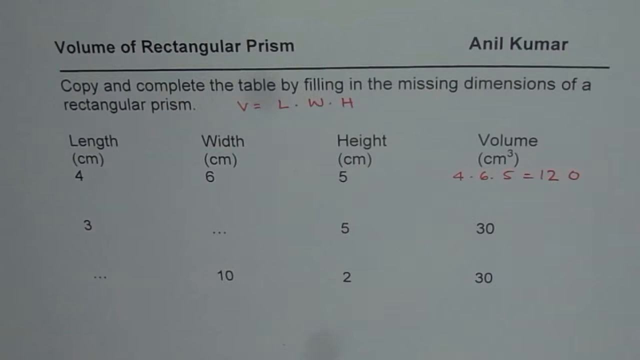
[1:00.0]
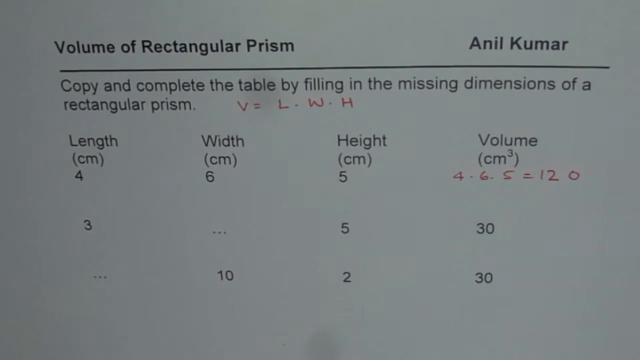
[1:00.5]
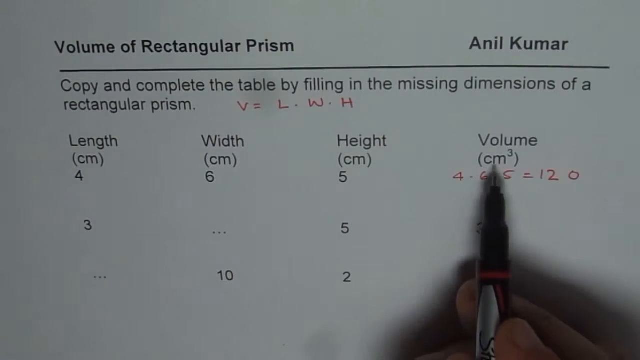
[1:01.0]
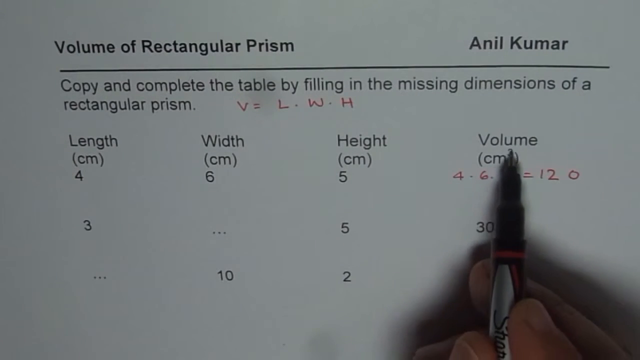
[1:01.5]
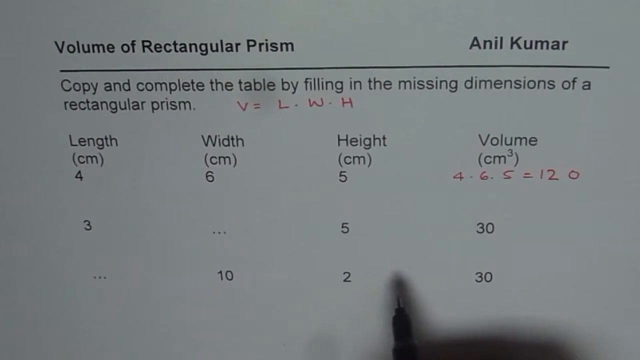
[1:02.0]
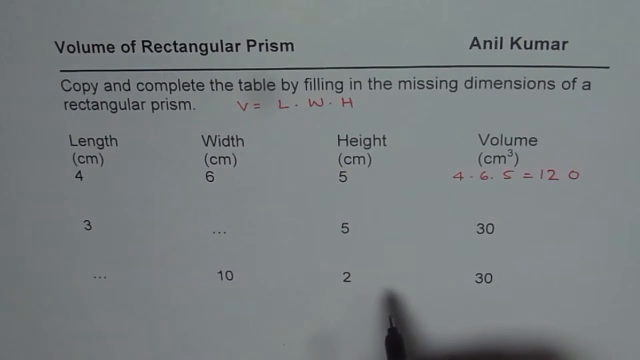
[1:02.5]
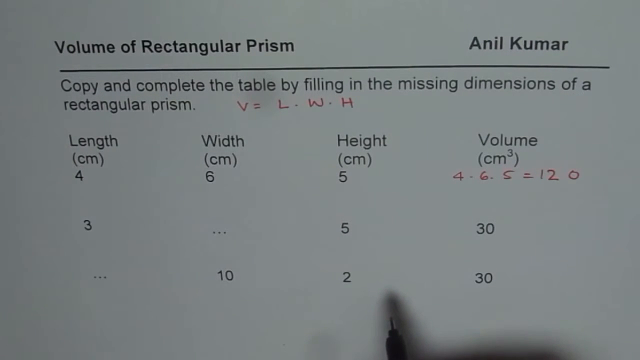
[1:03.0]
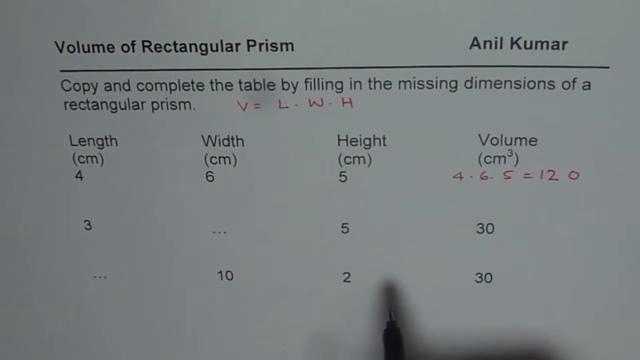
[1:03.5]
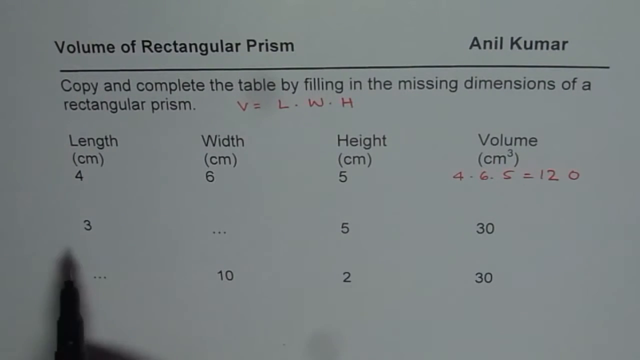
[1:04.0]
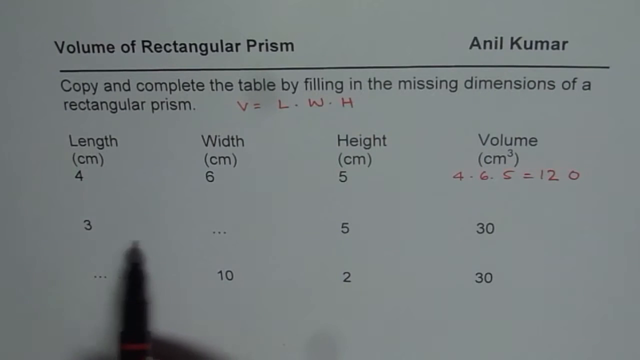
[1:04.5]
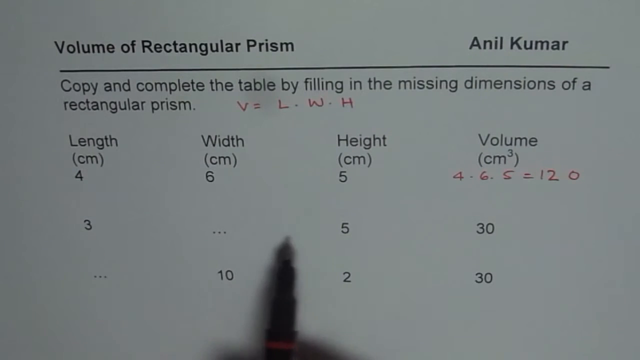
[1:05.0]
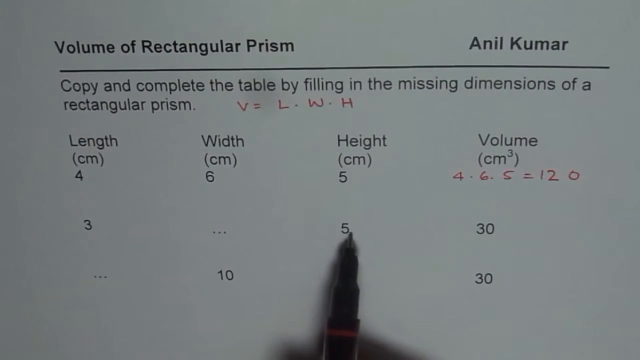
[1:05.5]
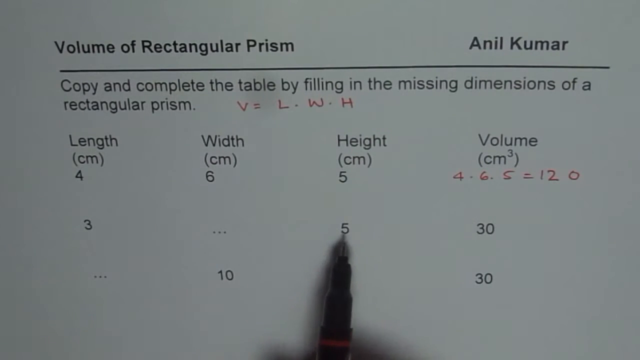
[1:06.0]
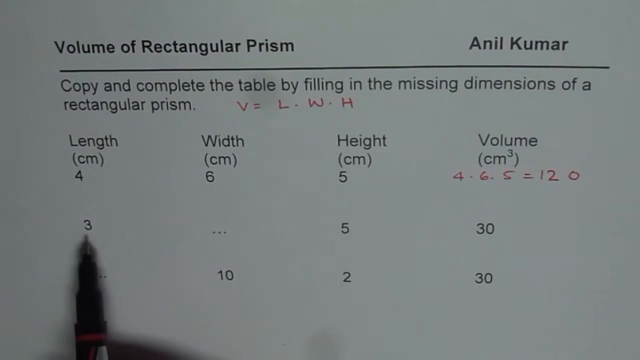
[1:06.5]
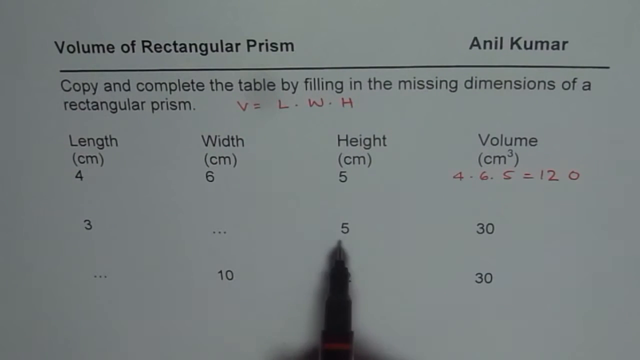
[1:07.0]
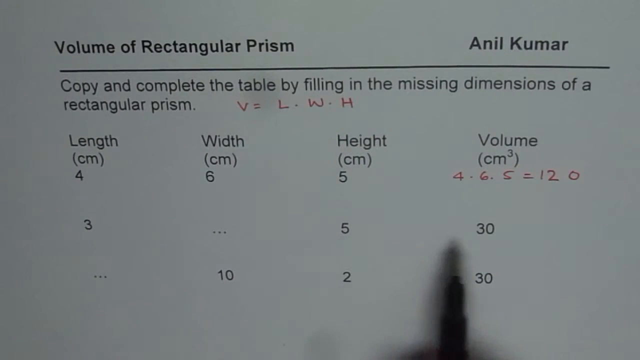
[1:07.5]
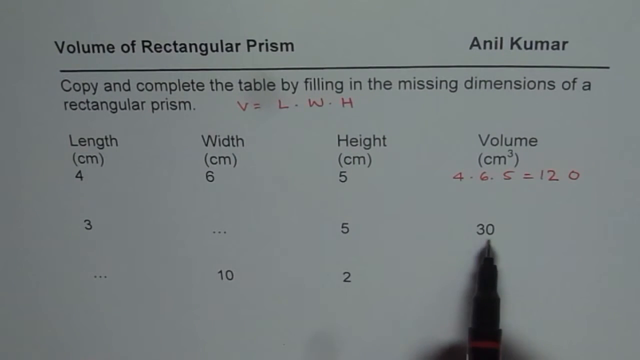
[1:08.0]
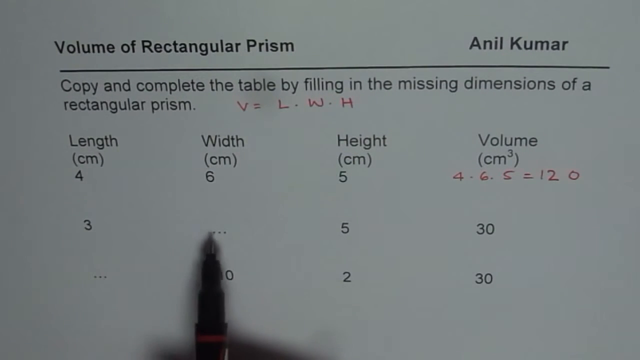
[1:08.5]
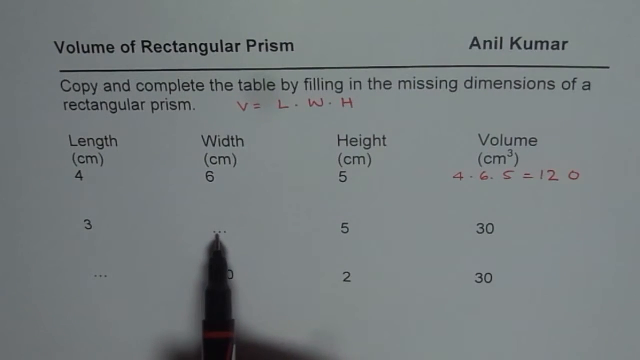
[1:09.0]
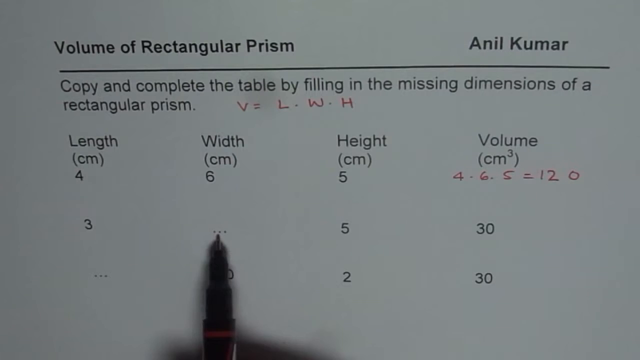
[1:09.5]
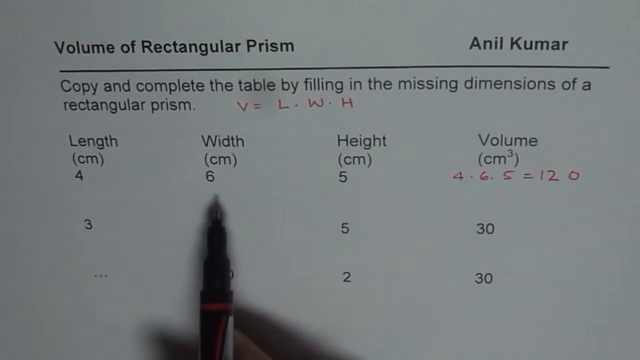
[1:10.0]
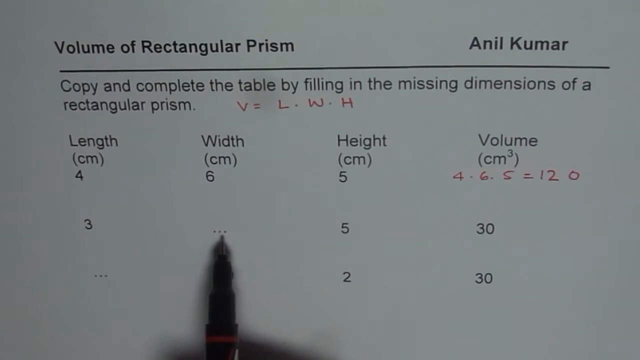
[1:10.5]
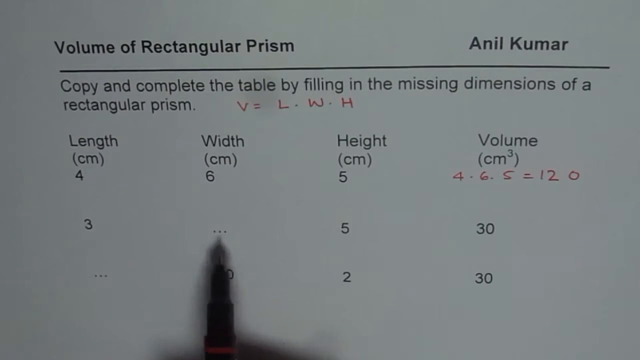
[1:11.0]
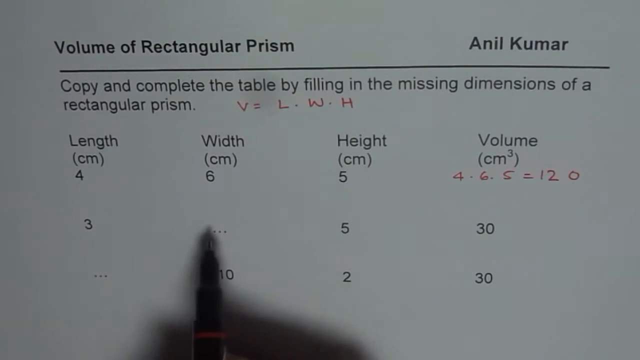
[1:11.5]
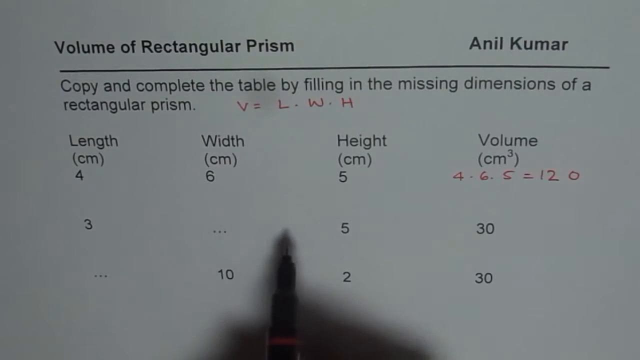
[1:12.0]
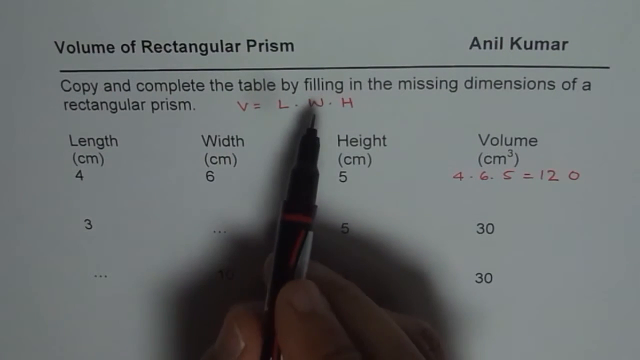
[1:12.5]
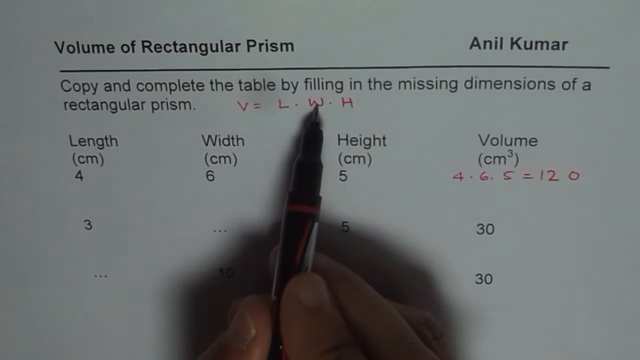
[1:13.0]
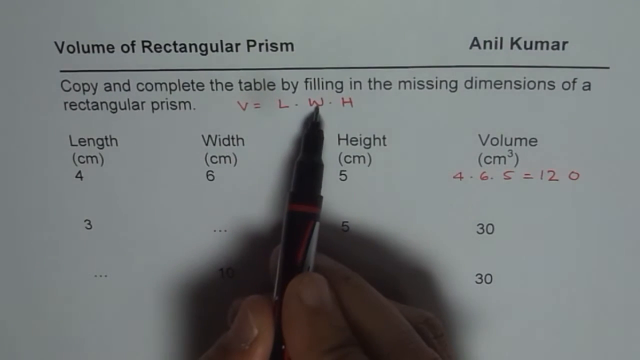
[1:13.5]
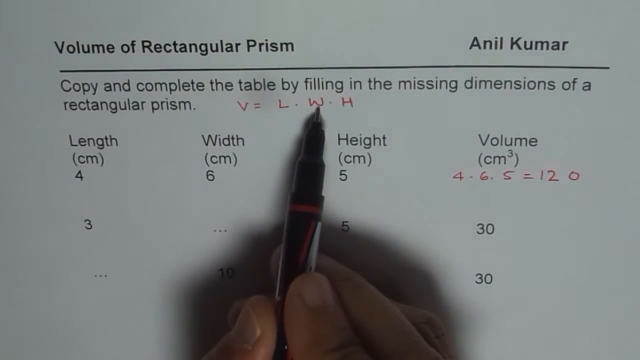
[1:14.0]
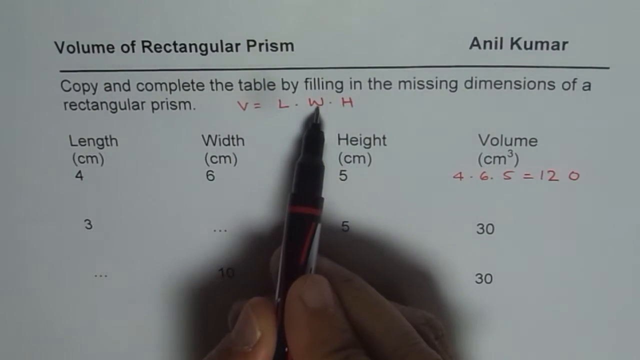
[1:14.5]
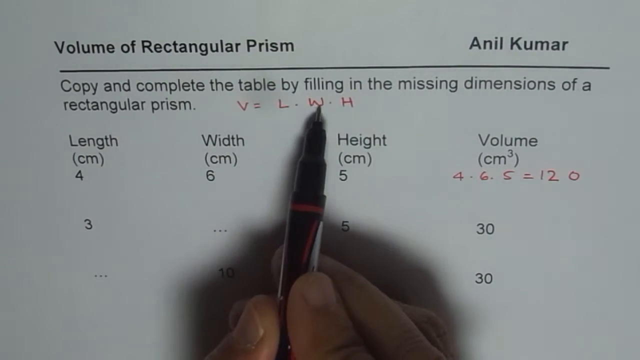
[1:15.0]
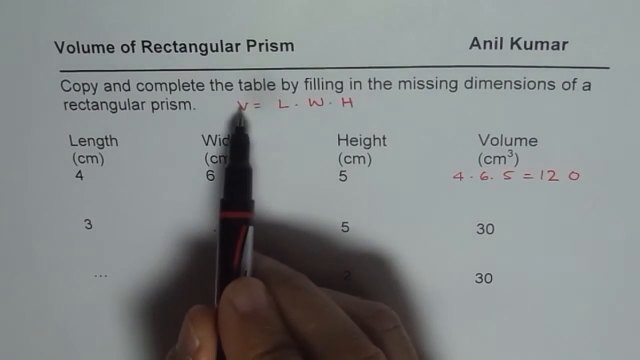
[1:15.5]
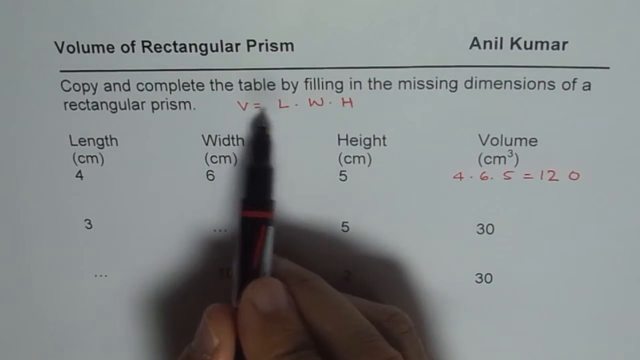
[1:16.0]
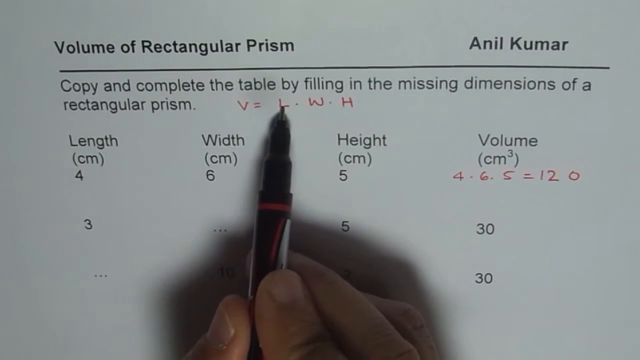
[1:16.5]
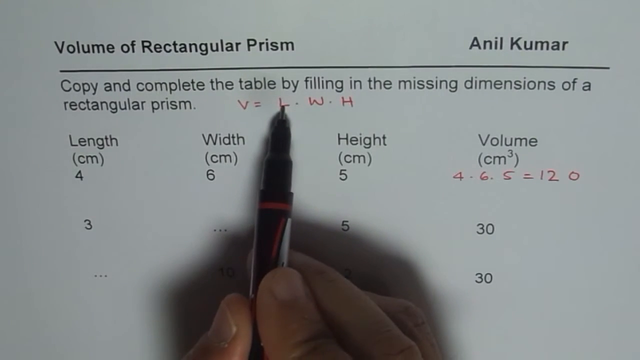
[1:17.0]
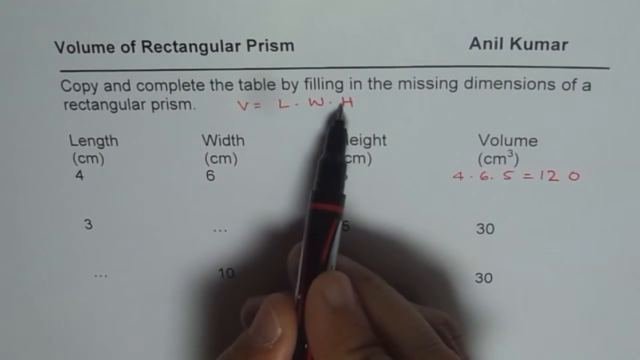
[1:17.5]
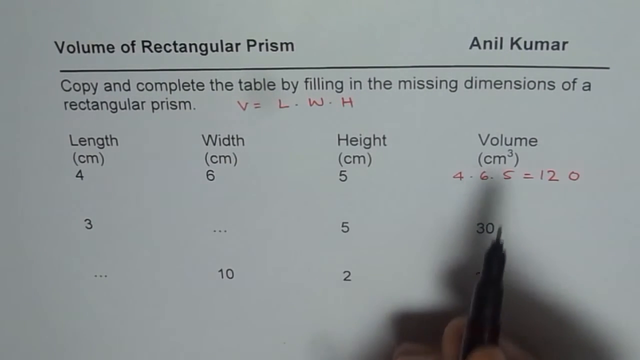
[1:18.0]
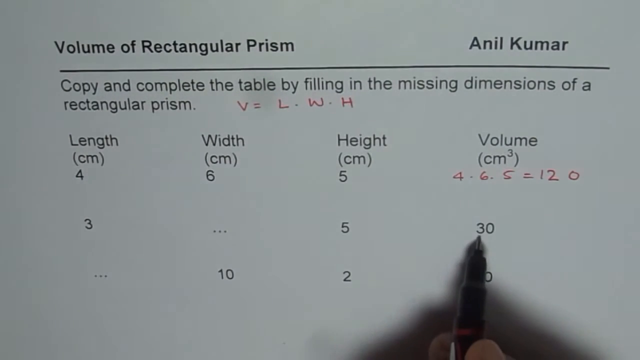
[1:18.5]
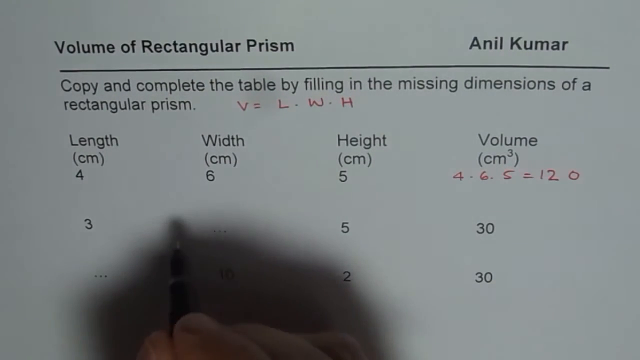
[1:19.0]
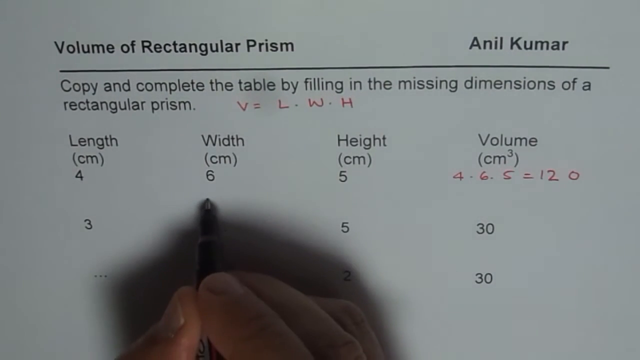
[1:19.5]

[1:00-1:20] The equation the person has worked out is on the far right side of the screen under the volume section: 4 · 6 · 5 = 120. The numbers 4, 6, and 5 come from the length, width, and height measurements, which are all in centimeters. After a couple of seconds, the person's hand appears in the bottom right corner, with the pen underneath the centimeter section of the volume column. They point to the volume section and the centimeter section, move the pen back to a neutral position between the height and volume columns at the bottom of the page, and then over to the 3 in the length column in the second row. The width column is blank in the second row. The pen moves to the 5 in the height column in the second row, back to the 3 in the length column, back to the 5 in the height column, and then to the 30 in the volume column in the second row. They move back to the blank width cell in the second row and hover the pen there for a few seconds, moving it around, then move between the volume and width sections and point to the W for width that they wrote at the top of the page.